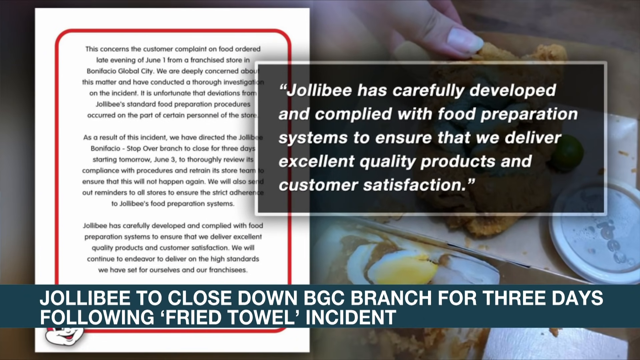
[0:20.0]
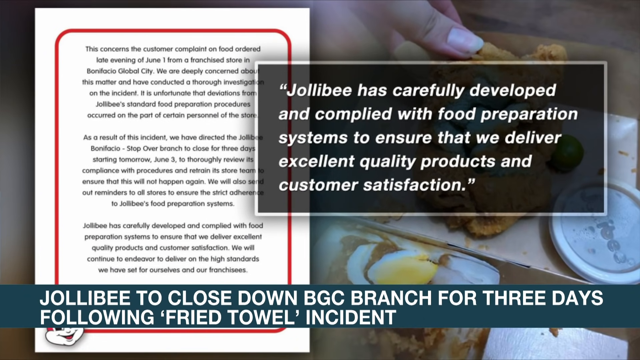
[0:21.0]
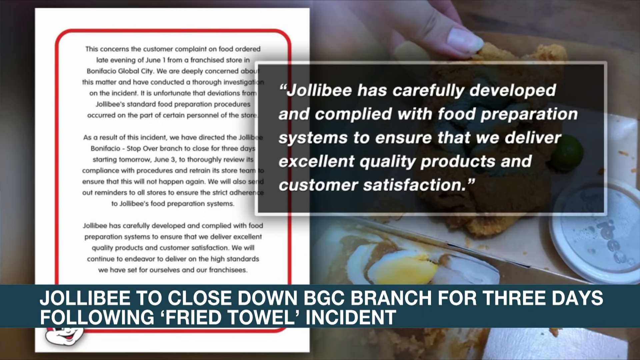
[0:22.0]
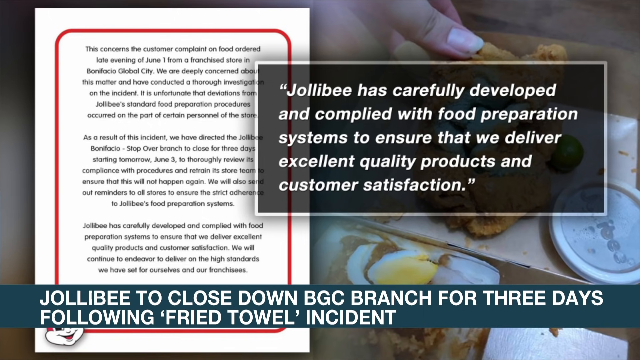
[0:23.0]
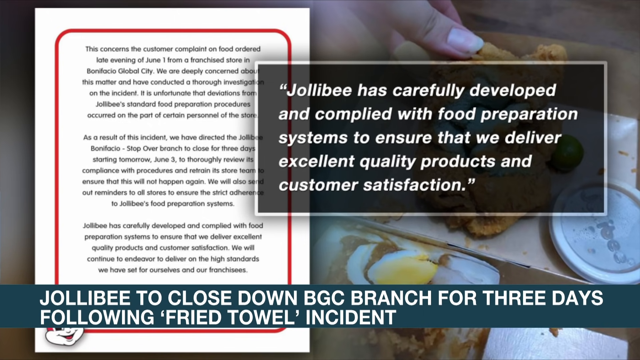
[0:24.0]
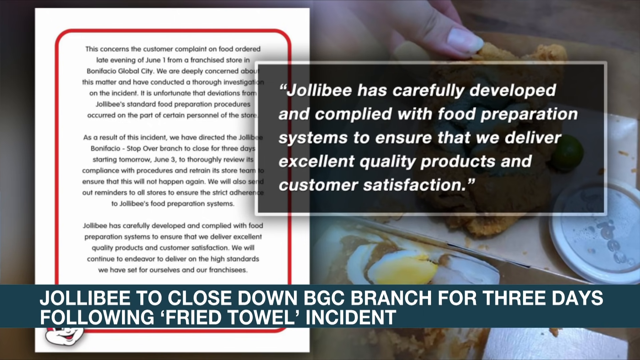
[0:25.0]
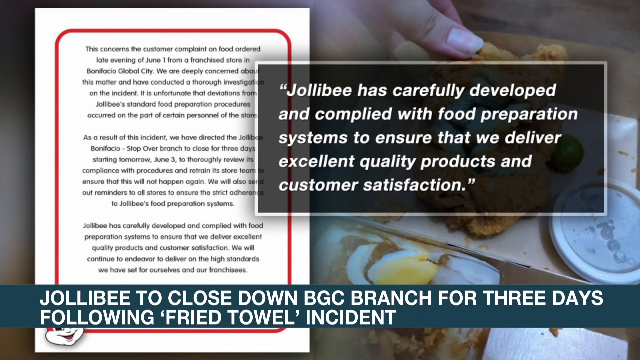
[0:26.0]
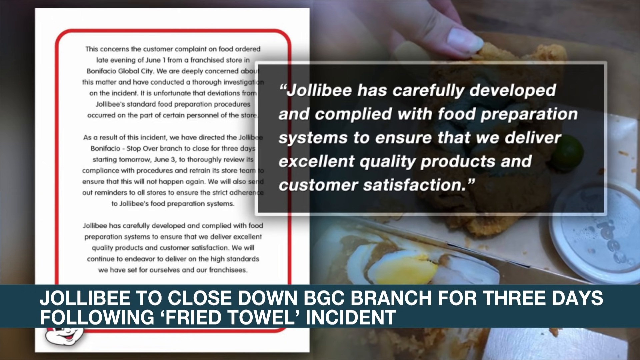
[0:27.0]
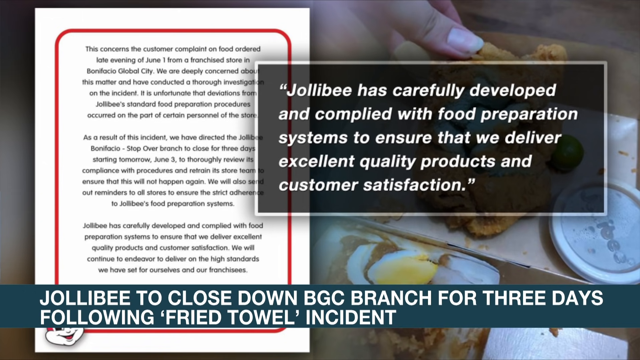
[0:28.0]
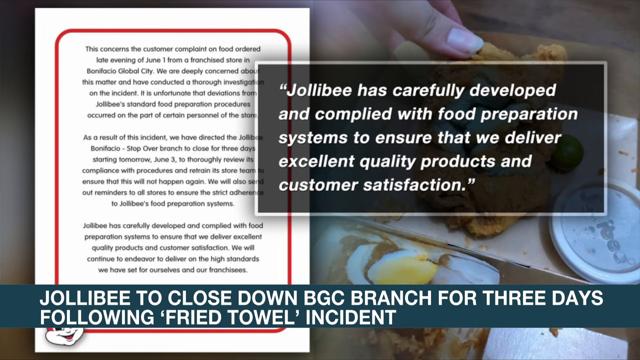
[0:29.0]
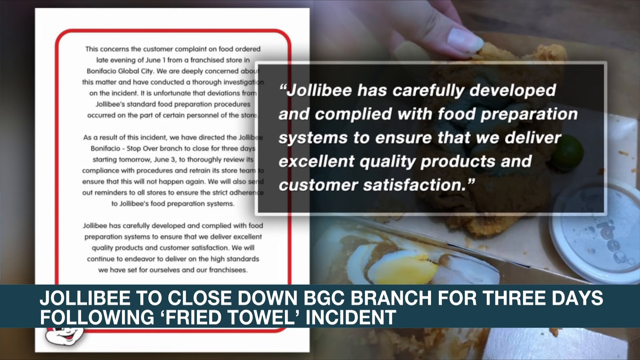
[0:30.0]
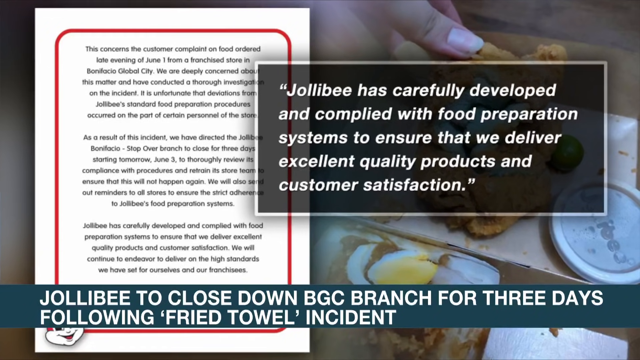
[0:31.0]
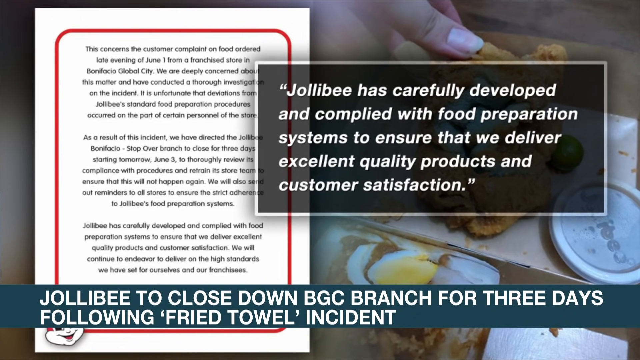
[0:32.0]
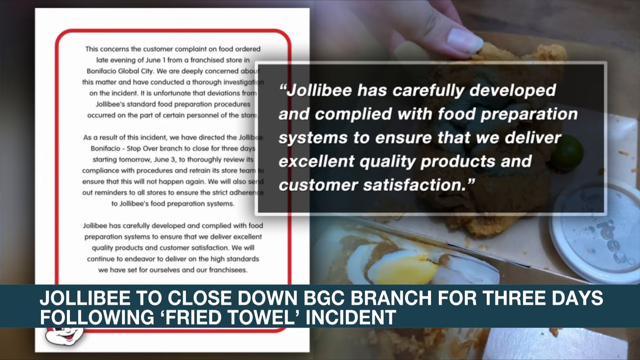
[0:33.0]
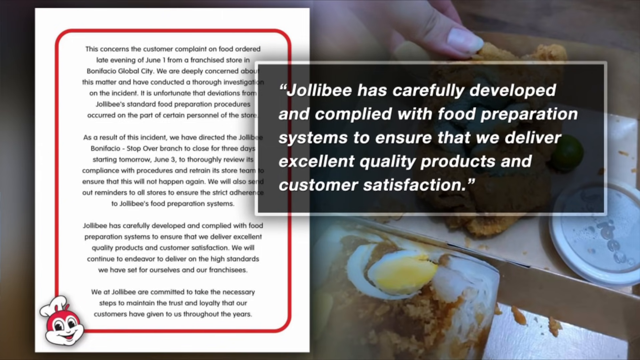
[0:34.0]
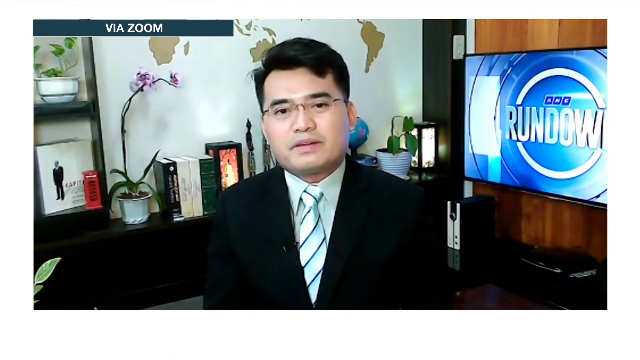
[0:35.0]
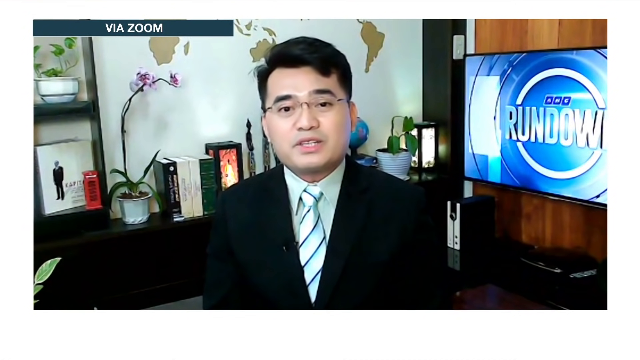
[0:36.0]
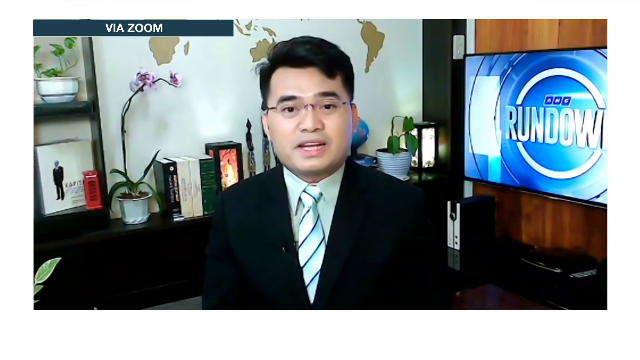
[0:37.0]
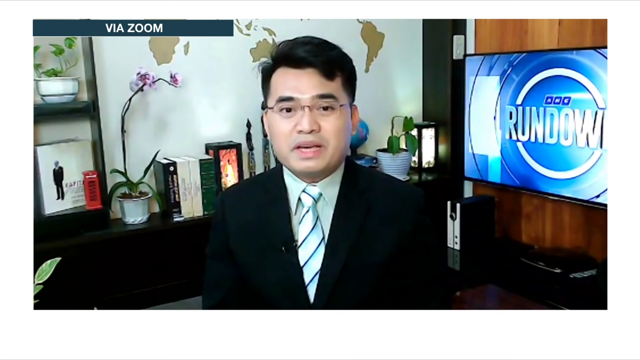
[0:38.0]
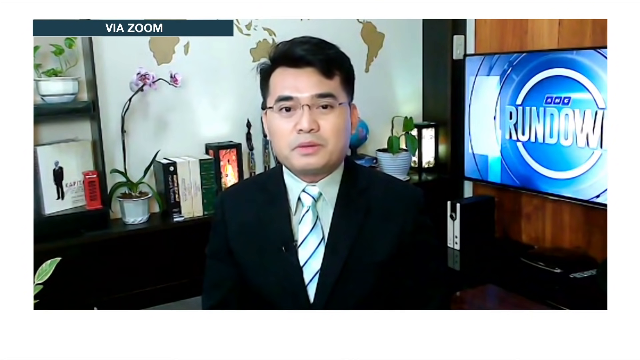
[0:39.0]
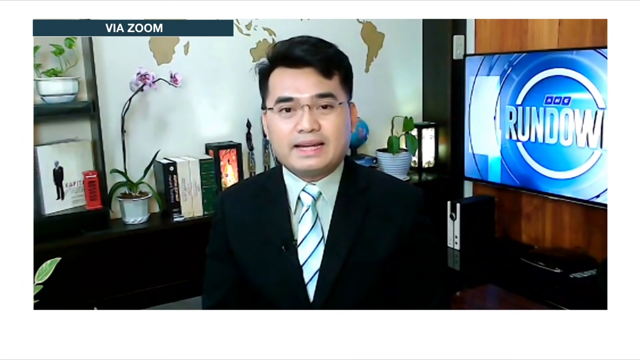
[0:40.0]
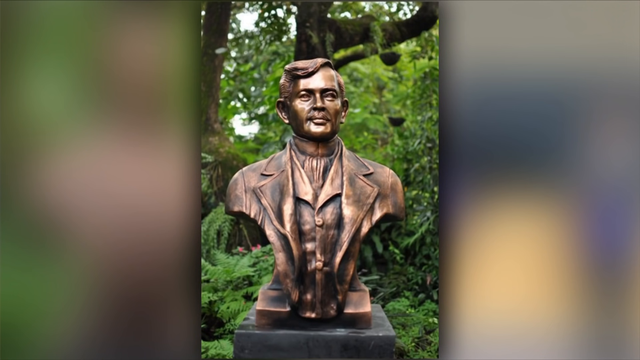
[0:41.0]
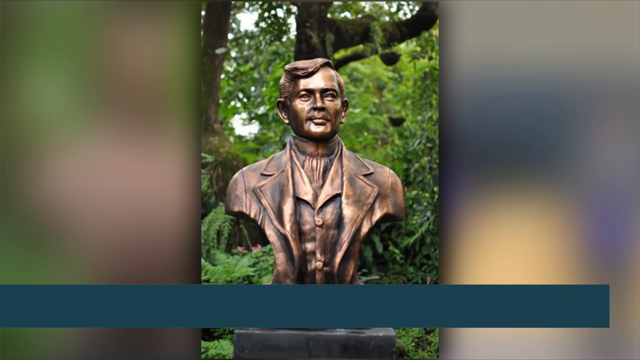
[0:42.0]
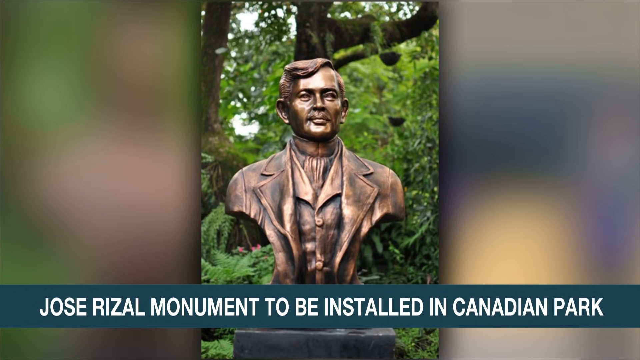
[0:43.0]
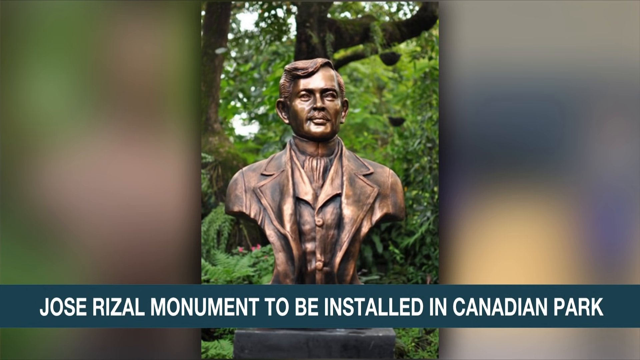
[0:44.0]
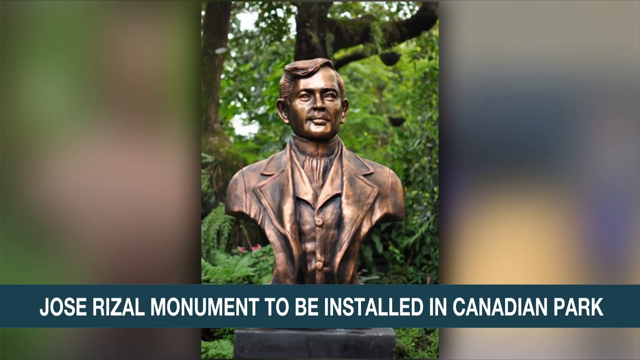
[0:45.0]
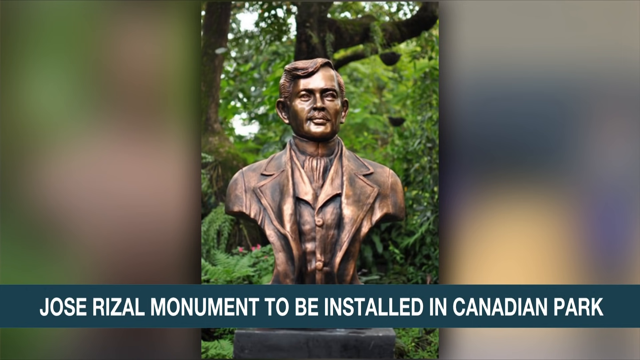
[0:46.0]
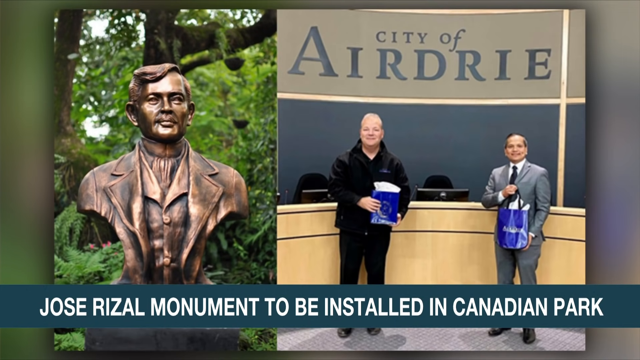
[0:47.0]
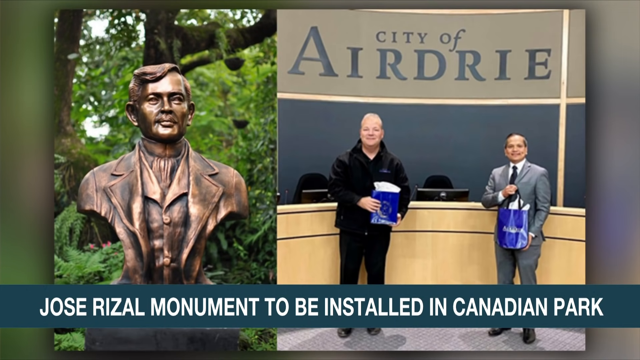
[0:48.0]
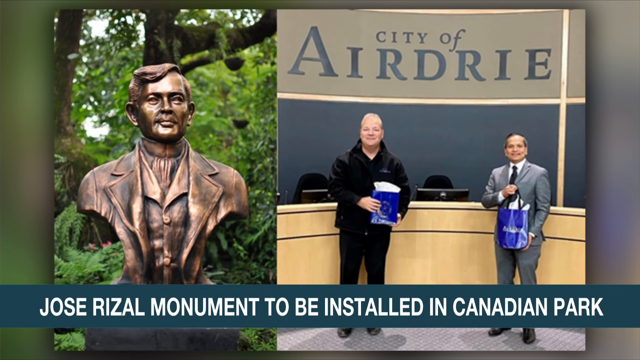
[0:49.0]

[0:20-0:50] A news article written on a white sheet of paper is shown as a video image. On the right-hand side of the screen, an excerpt of the article appears in quotation marks, in white letters against a square black backdrop. In the background is an image of a hand touching a piece of food resting on a plate. At the bottom of the screen, text reads "Jollibee to close down BGC branch for three days following fried towel incident." After several more seconds, the video switches to a man in a black suit, white undershirt and striped blue tie, with short dark hair and glasses. He appears to be sitting in a chair, speaking directly to the camera. Over his left shoulder, a TV monitor on the wall shows a blue screen with the word "RUNDOWN" in white. A purple orchid is in the background, along with several books stacked next to each other. In the upper left-hand corner, text reads "via Zoom." Outdoor footage then shows a bronze statue of a man, with a headline underneath reading "Jose Rizal monument to be installed in Canadian Park." Next, a split screen shows the statue alongside two men staring at the camera, holding a blue object in their hands.